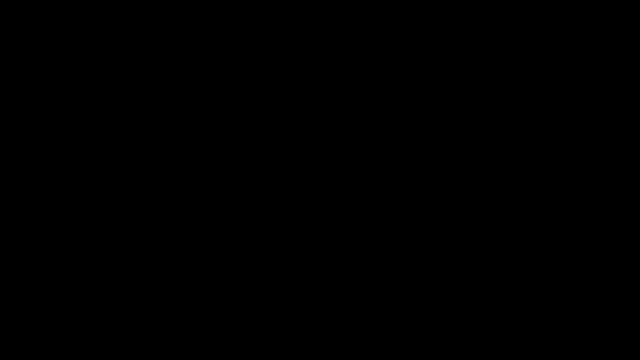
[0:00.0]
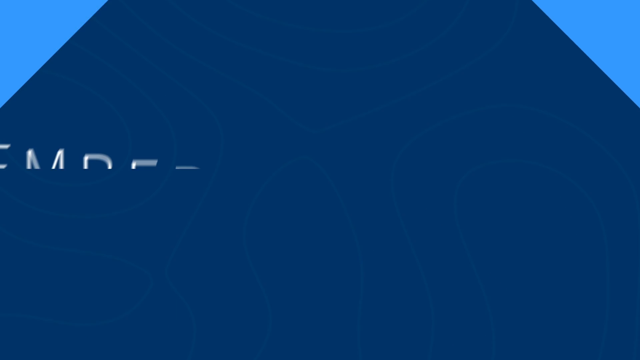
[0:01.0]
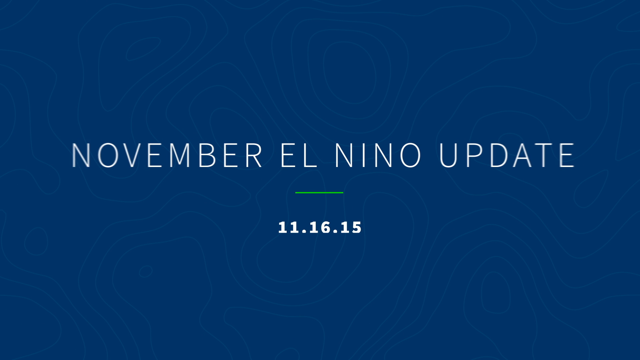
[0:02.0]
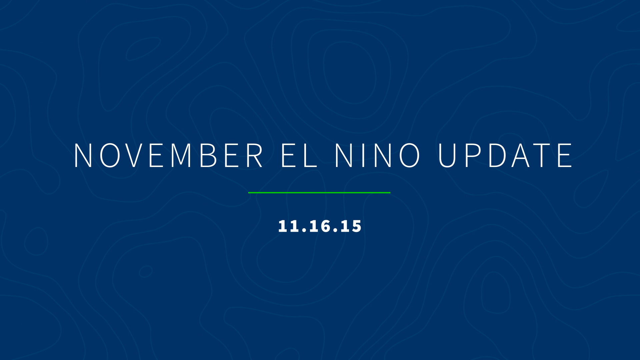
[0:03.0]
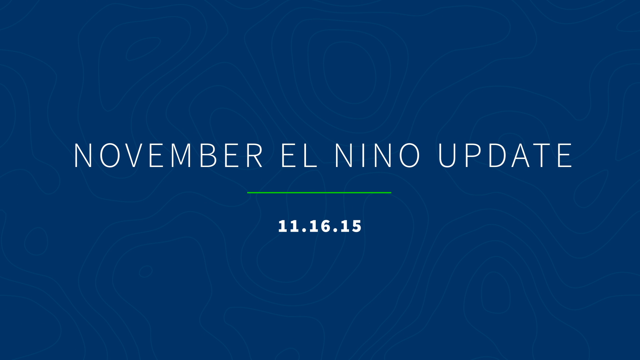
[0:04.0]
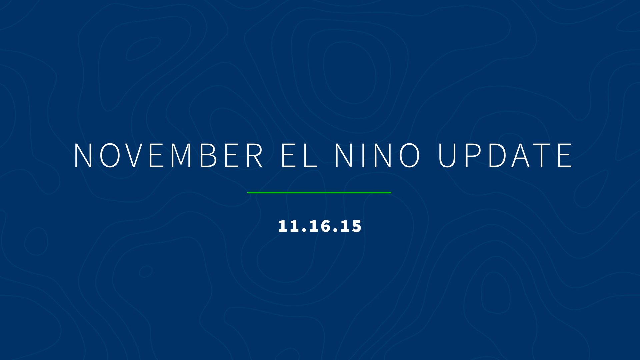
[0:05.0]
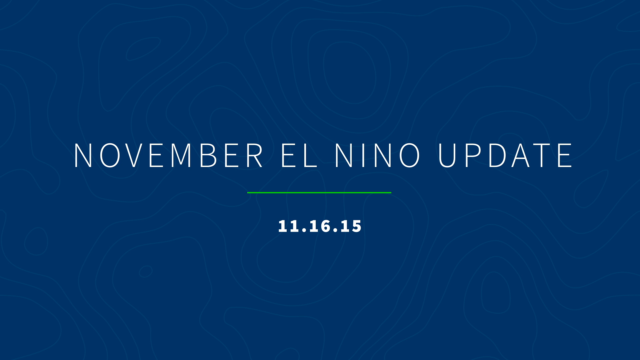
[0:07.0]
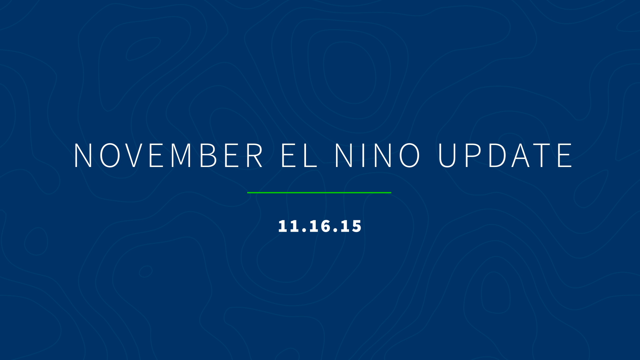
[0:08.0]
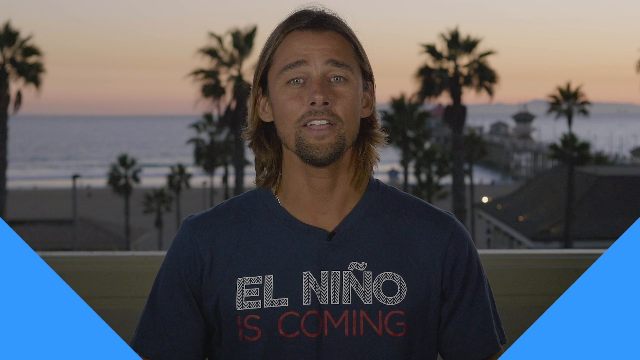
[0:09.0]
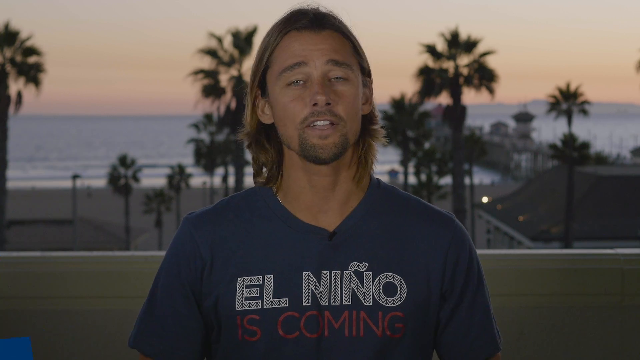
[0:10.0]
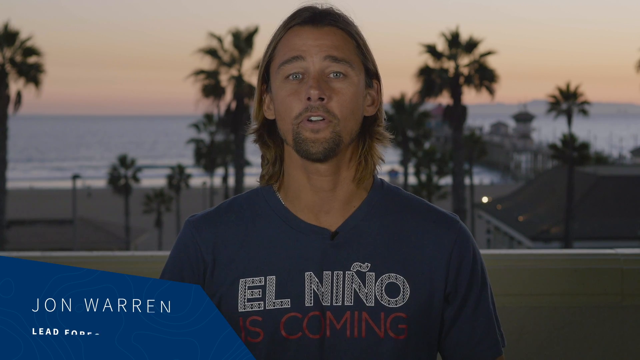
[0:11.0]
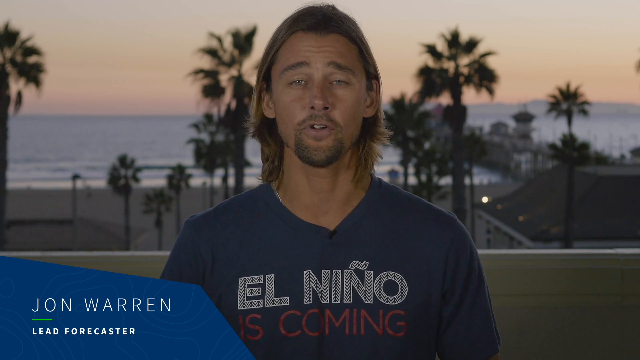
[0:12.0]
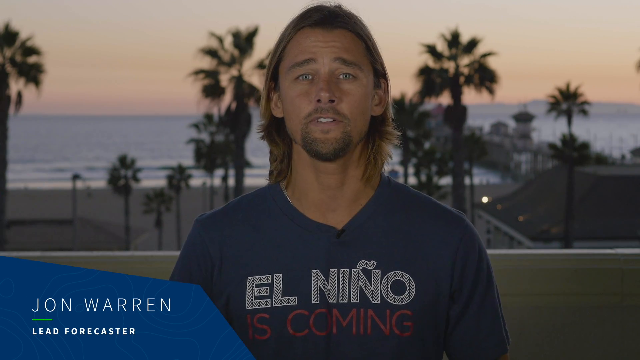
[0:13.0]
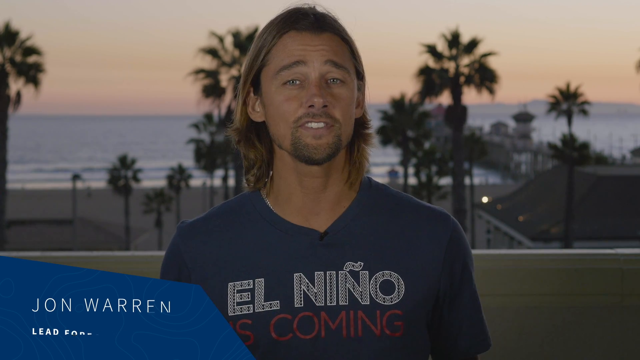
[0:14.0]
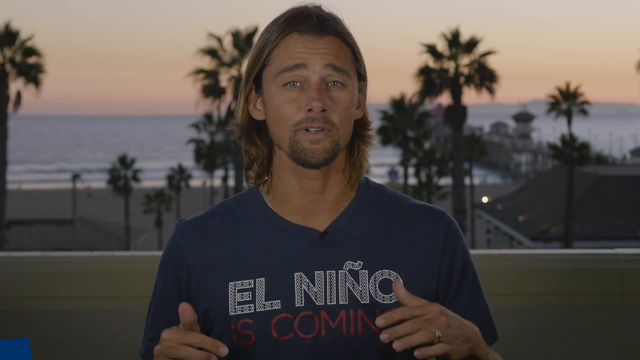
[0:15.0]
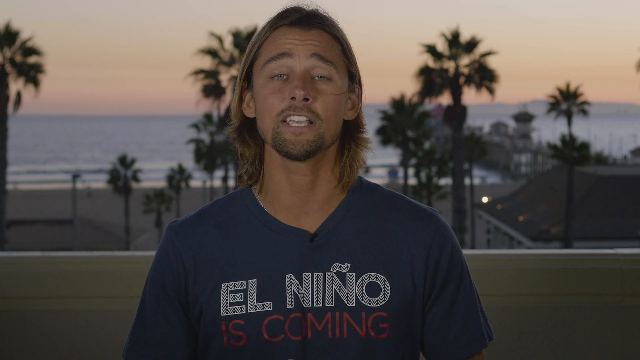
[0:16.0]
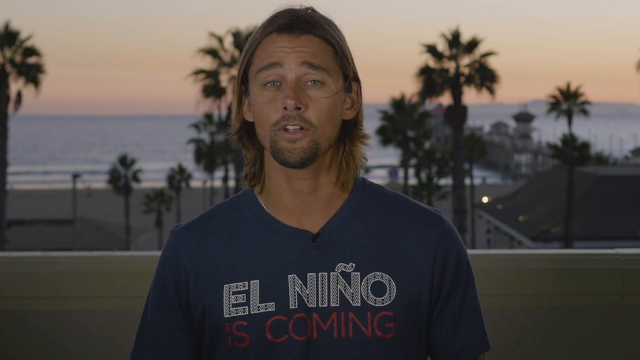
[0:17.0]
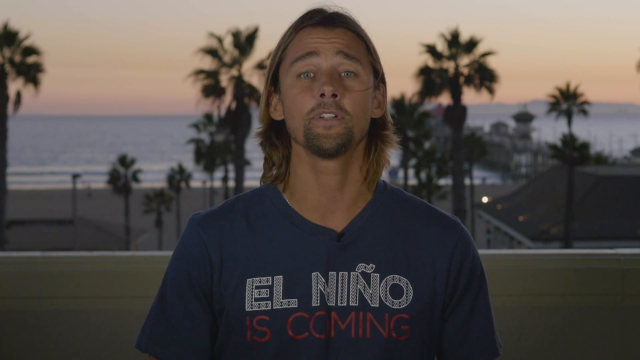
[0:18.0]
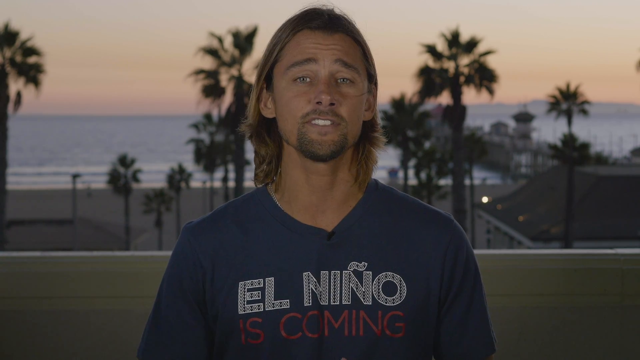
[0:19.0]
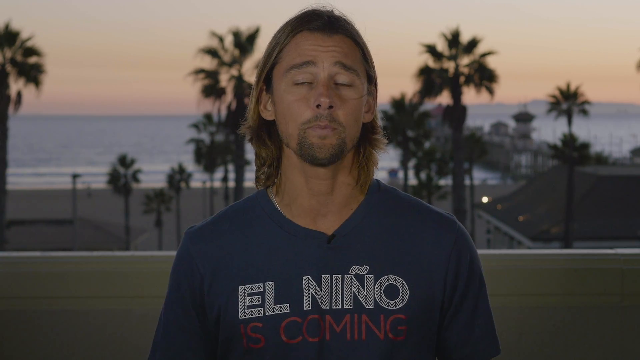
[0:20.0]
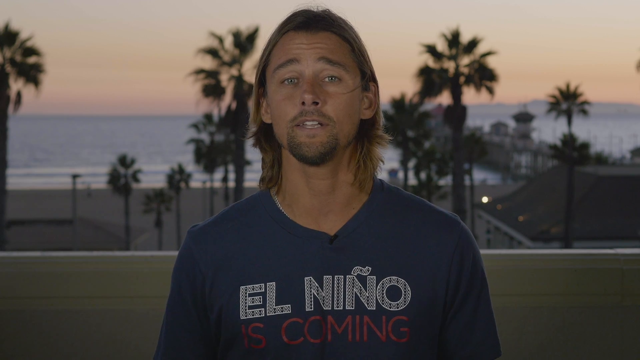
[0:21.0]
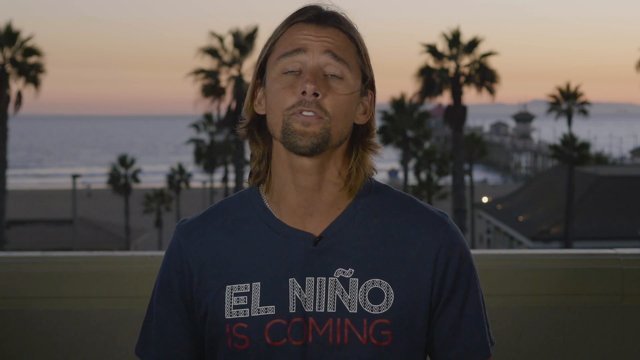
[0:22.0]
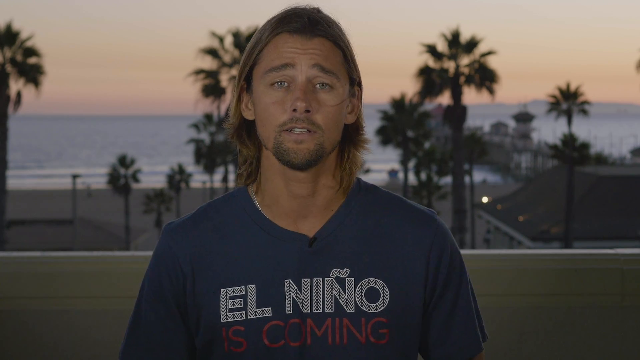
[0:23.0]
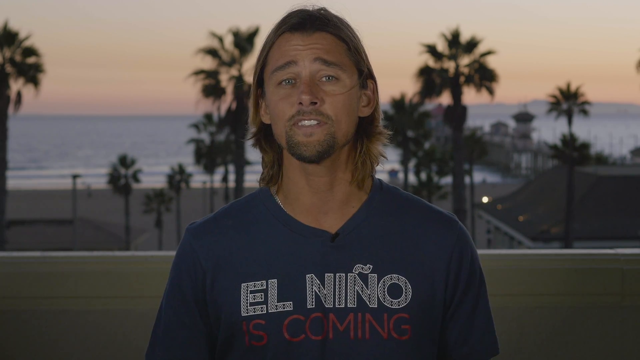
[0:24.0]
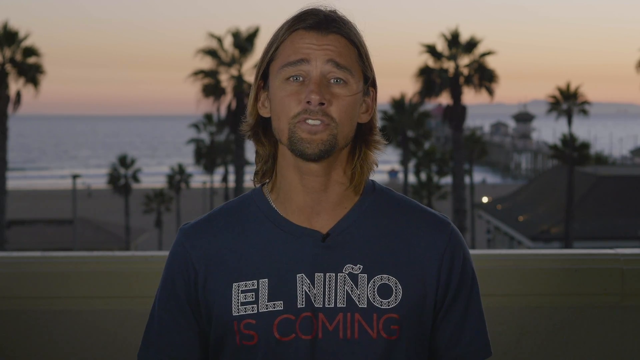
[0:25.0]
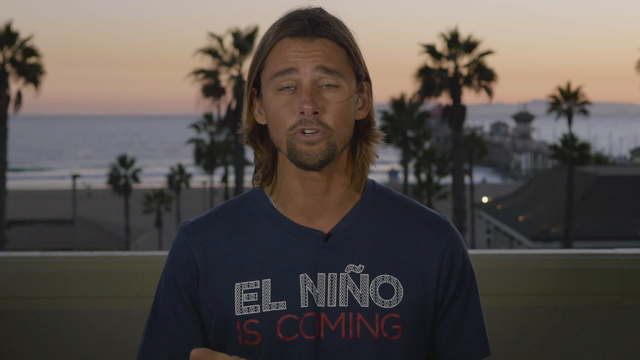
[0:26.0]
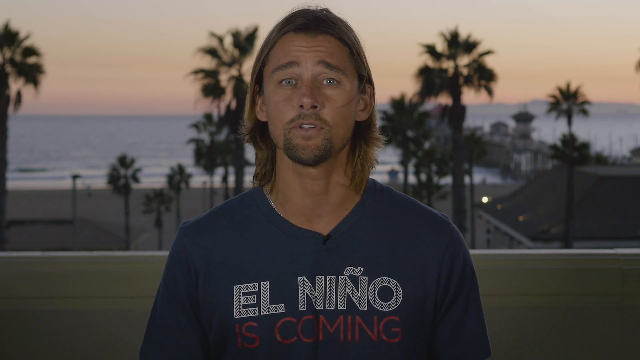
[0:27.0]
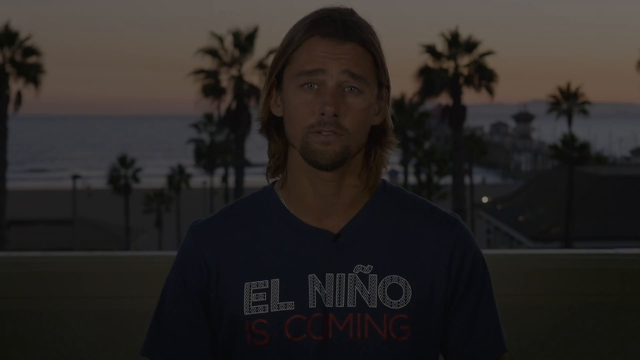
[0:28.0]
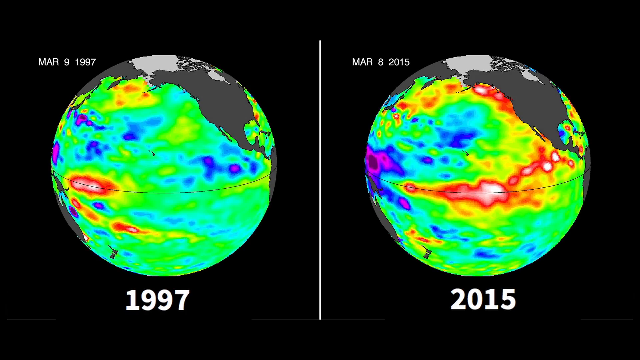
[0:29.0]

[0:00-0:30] The opening screen builds up: a shape almost like a diamond rises from the bottom and then expands out to the corners. White text reads "November El Nino update", and right below it "11-16-15", apparently meaning November 16th, 2015, with a small green line separating the two. A man then appears to give a presentation, looking directly at the viewer and talking. His name appears at the bottom left: John Warren, lead forecaster. He wears a navy blue shirt that says "El Nino is coming" and stands in front of what is probably a green screen with a sunset beach background.